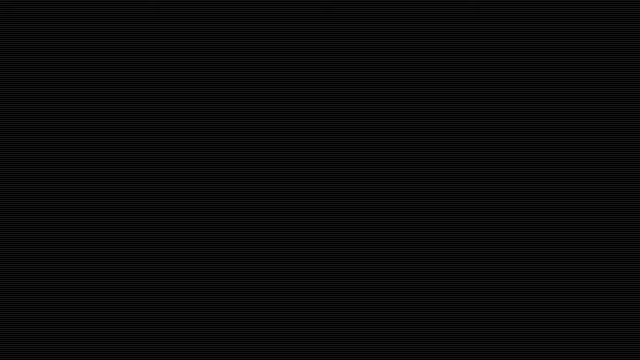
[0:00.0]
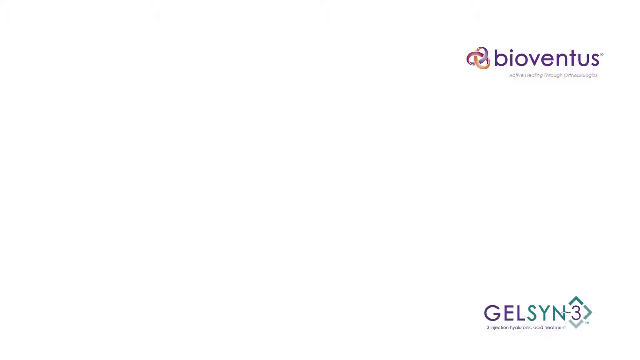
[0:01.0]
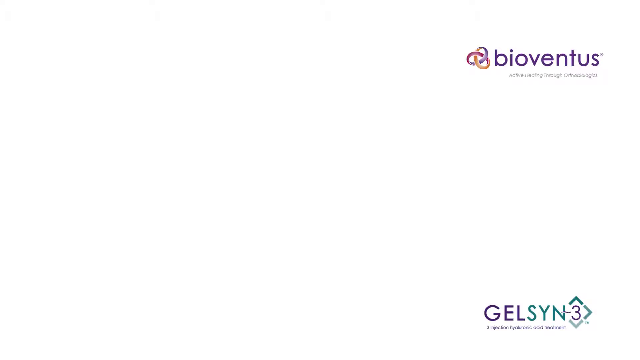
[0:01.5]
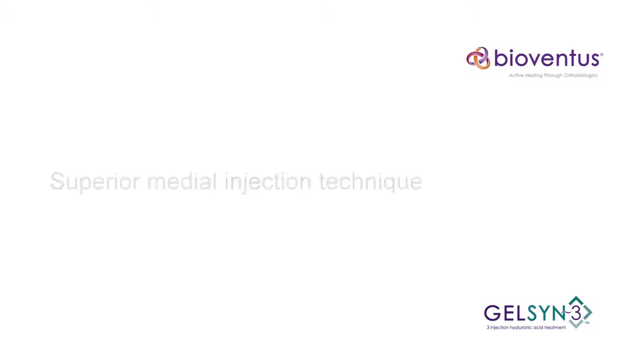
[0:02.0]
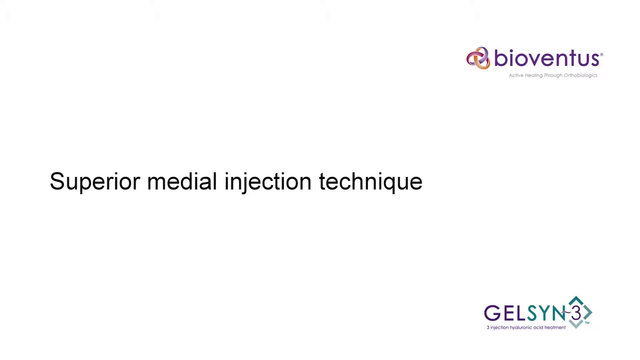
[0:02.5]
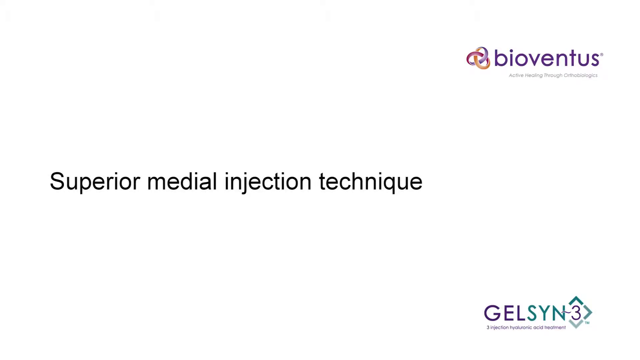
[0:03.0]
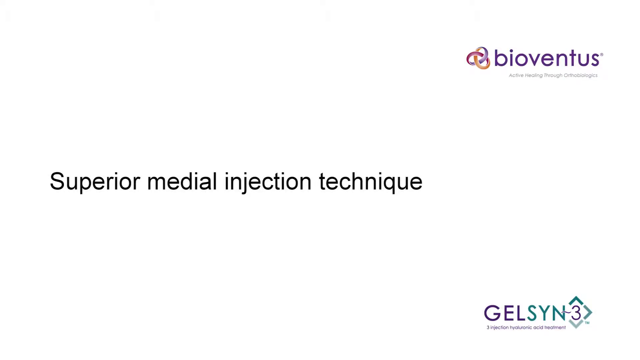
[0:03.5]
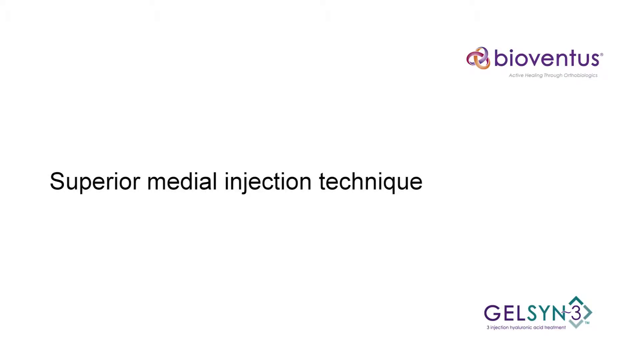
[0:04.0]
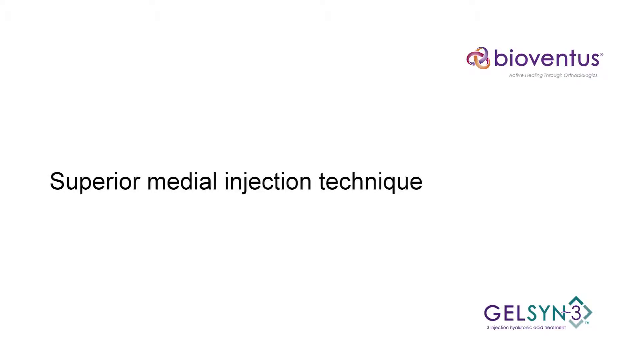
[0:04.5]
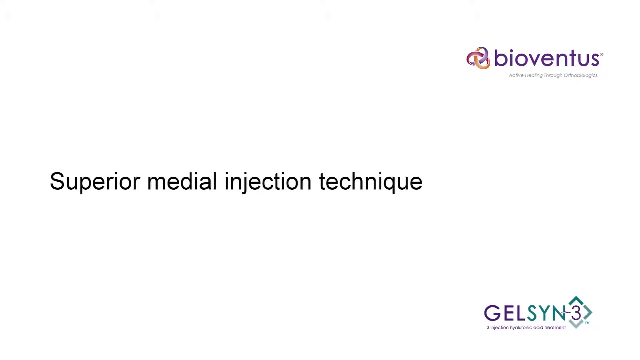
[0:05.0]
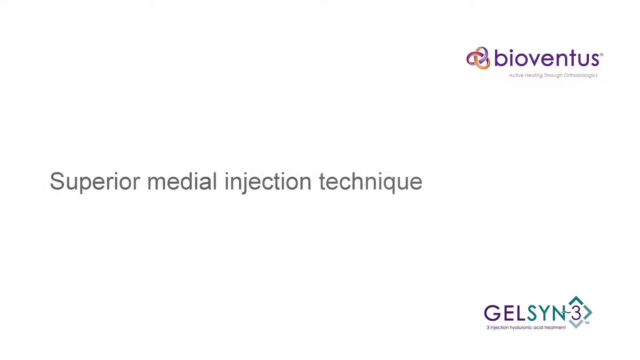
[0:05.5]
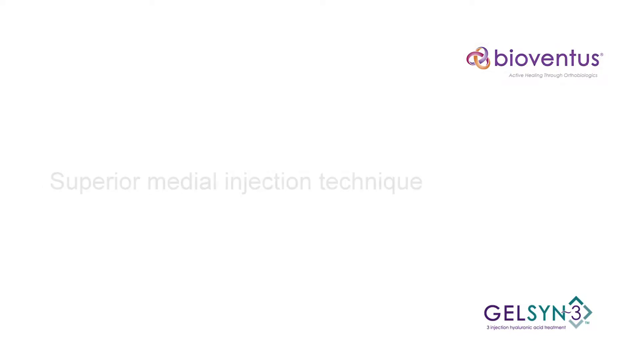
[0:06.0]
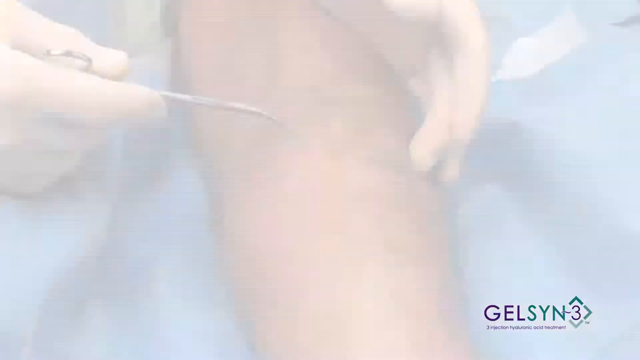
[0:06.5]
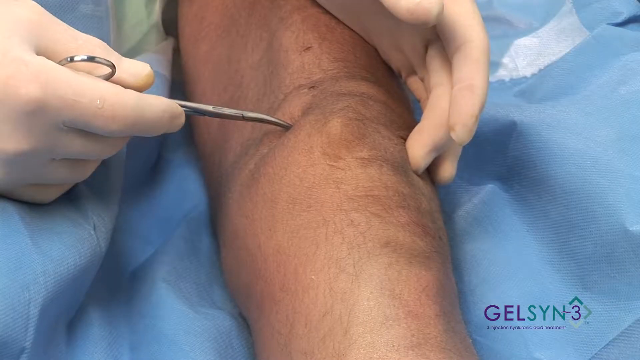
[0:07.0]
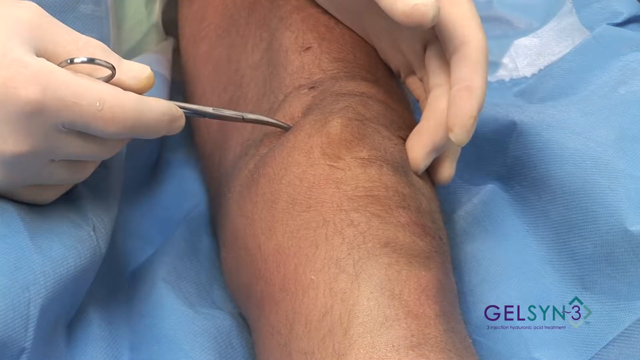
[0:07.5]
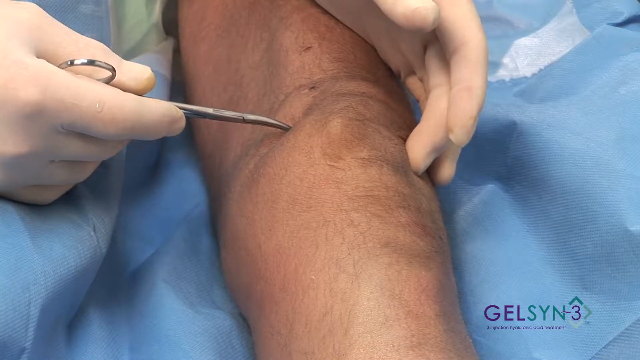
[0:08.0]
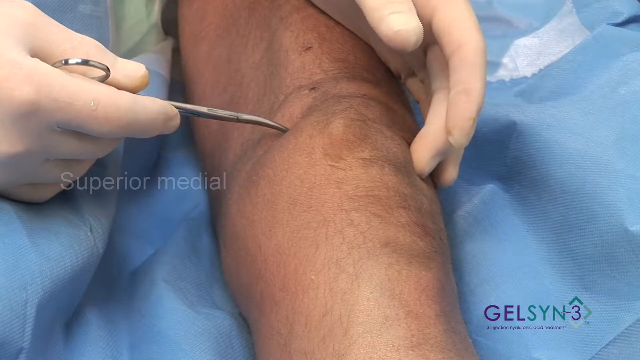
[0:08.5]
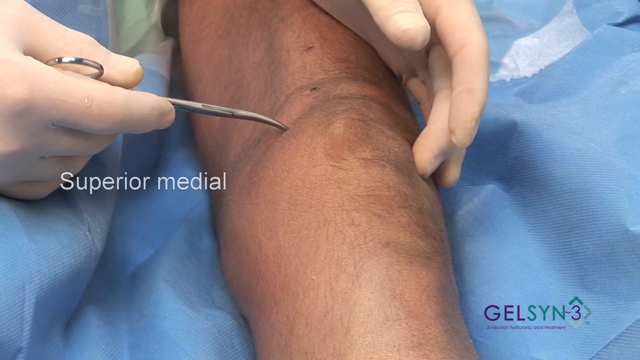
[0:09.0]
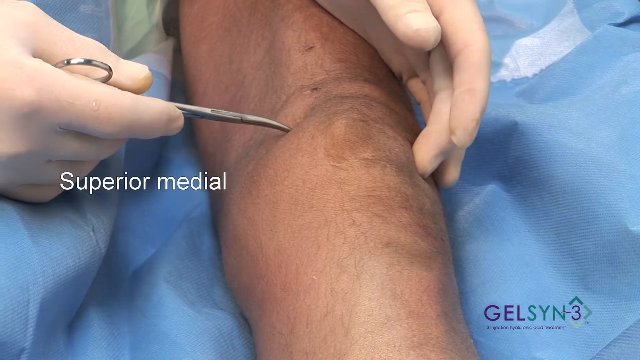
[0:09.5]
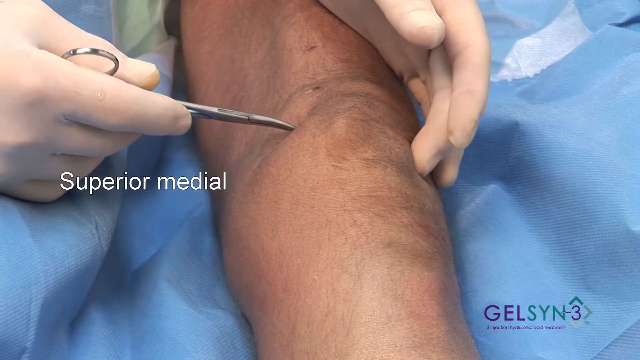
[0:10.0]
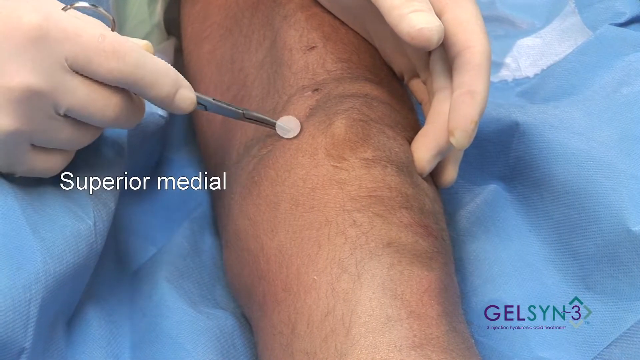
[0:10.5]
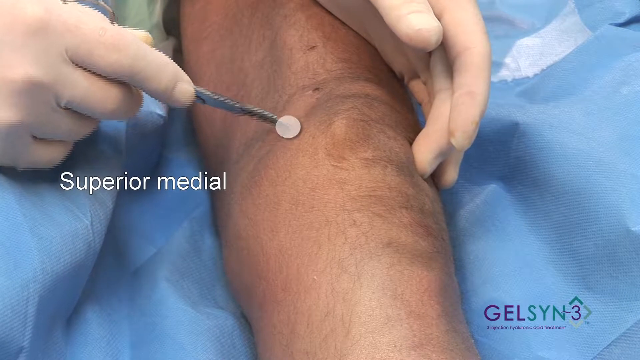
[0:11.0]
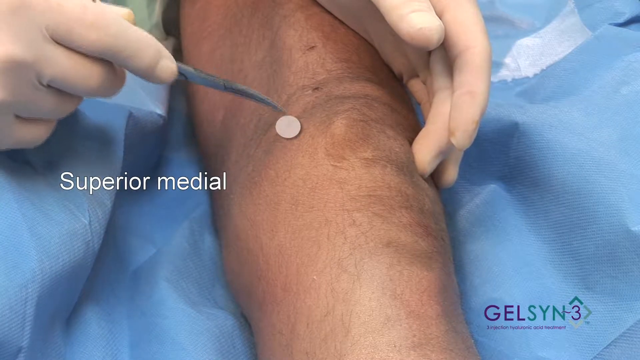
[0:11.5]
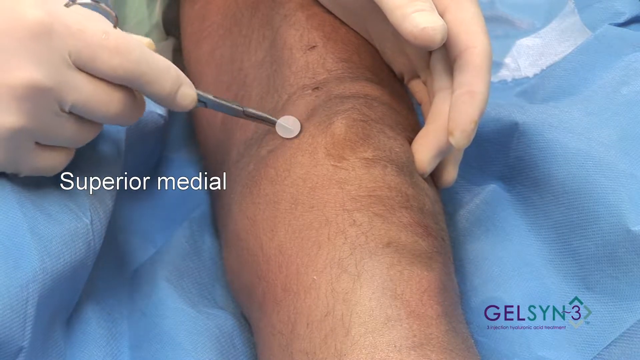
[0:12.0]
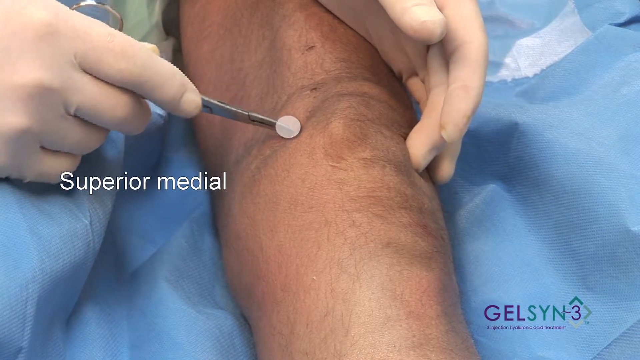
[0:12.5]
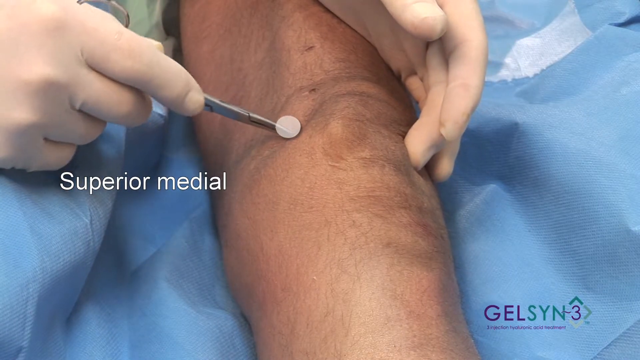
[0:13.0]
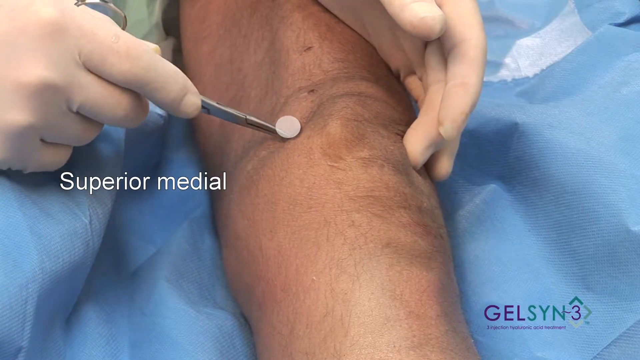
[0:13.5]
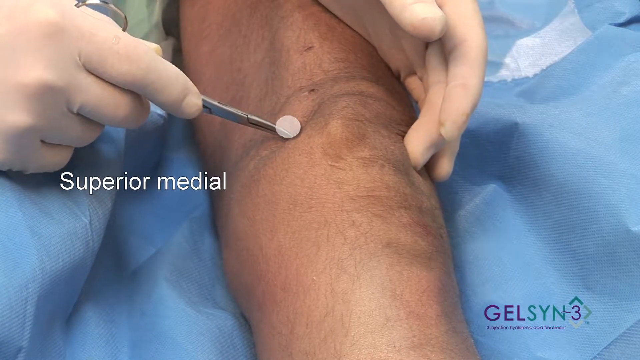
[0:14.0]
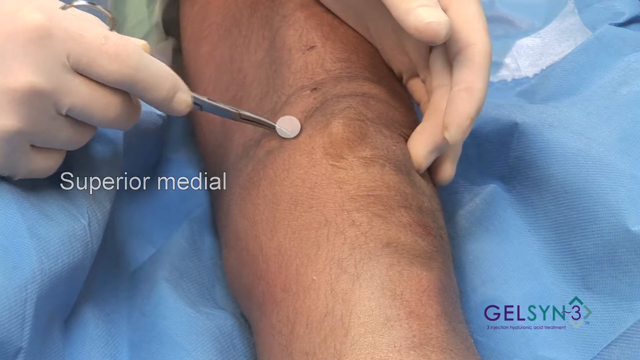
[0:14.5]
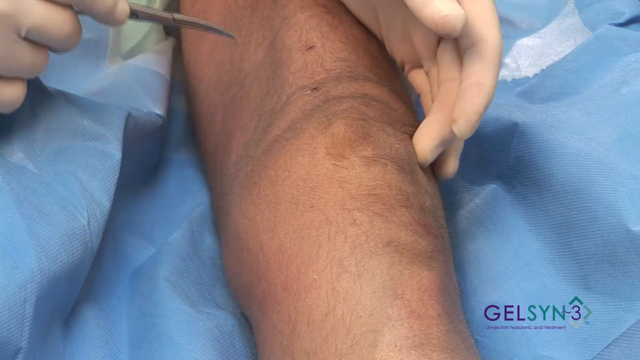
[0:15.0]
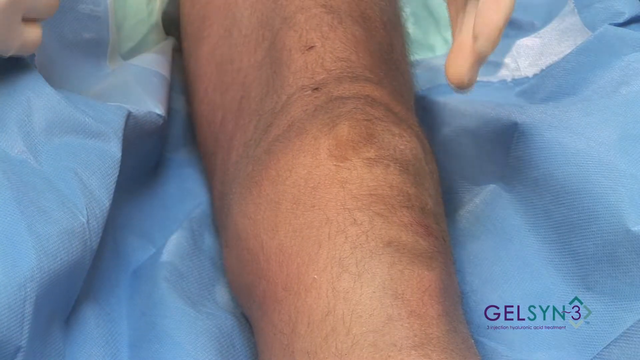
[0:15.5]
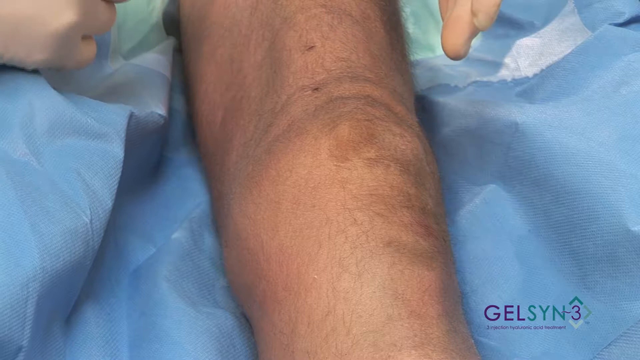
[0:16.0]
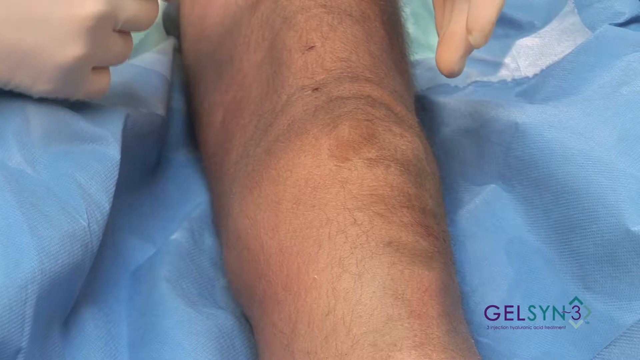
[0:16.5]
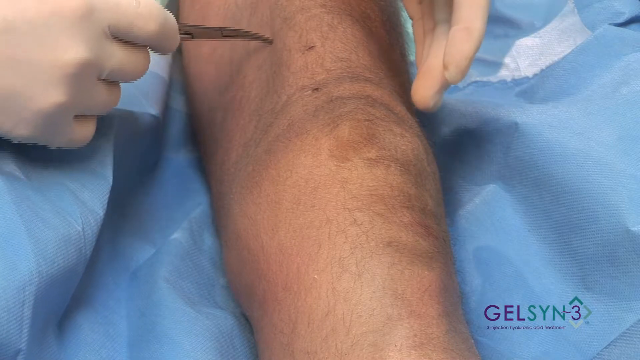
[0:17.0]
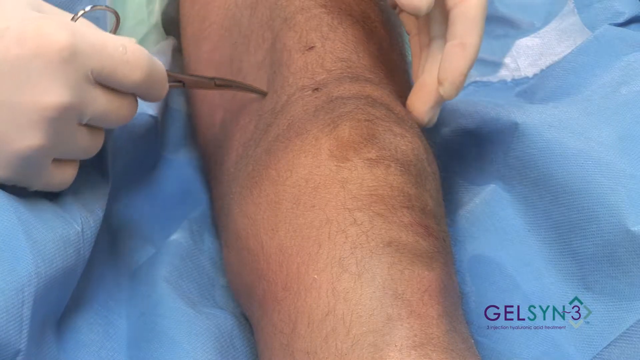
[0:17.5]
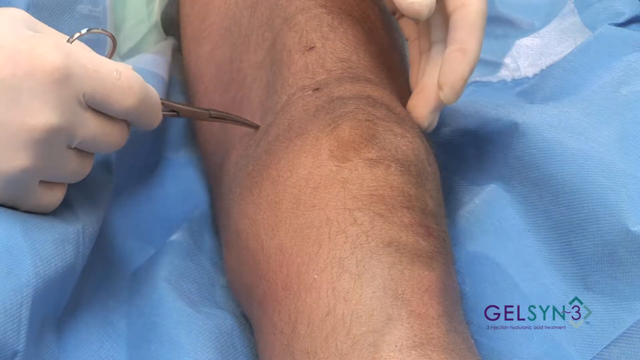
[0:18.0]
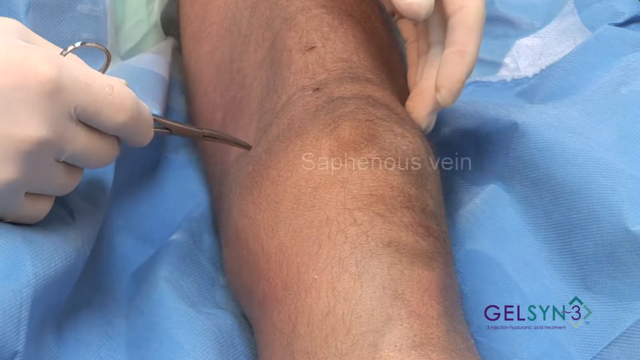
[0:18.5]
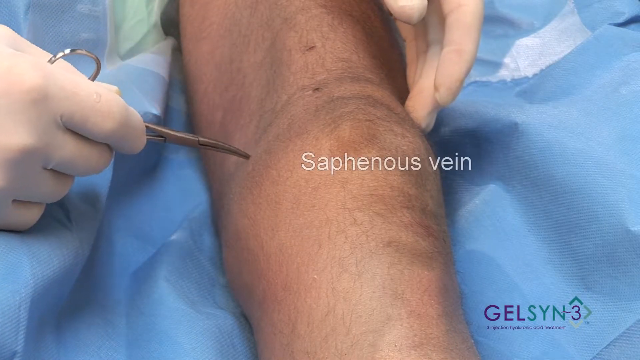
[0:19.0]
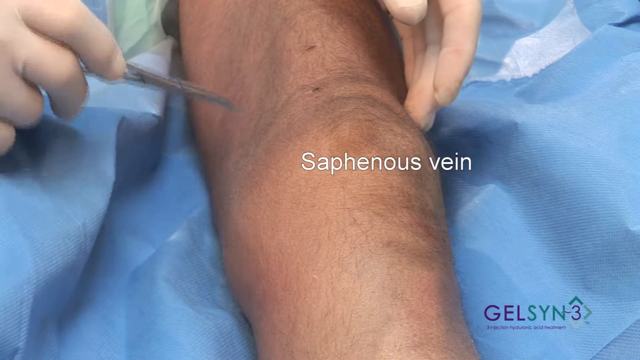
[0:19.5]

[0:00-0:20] The video opens on a white background. About halfway down, somewhat to the left, black sans-serif text reads "superior medial injection technique," with only the first letter of the sentence capitalized. In the upper right, purple lowercase letters read "bioventus," with a tiny line of text beneath it and a small logo of three rings together in purple and red to the left of the word. In the lower right it says "gelsyn" with a small logo to the right of it; "gel" is in purple and "syn" in green, run together, with a little text underneath. The text then turns out to read "gelsyn3," with the 3 in purple. The scene shifts to a medical setting: a Caucasian leg rests on blue exam paper like that in a doctor's office. White latex-gloved hands come into view from the top of the frame, and one of them appears to hold scissors in the right hand. The end of the scissors pokes at the knee, seemingly to show a location, and white text beneath the hand reads "superior medial," with a small white circle appearing where the scissors press on the side of the knee, possibly marking the area of interest. The scissor tip is then run down the side of the leg from the top, and white text reads "saphenous vein," apparently indicating where that vein is located.